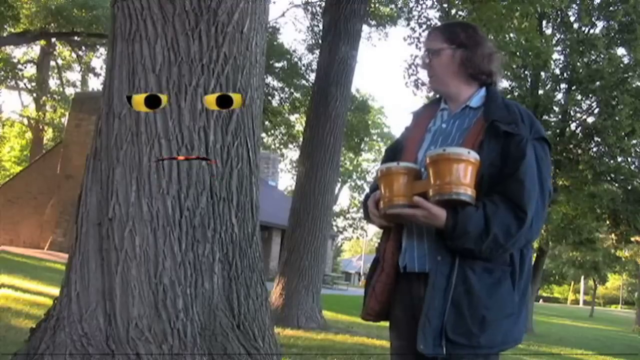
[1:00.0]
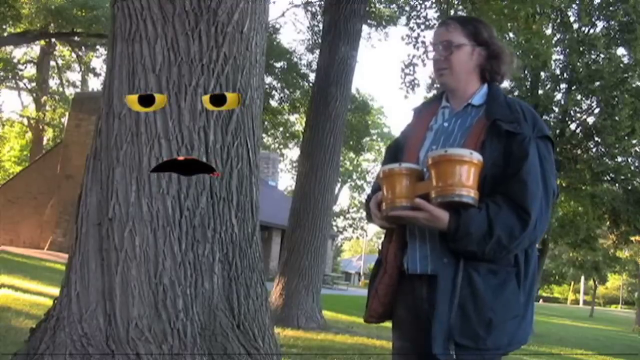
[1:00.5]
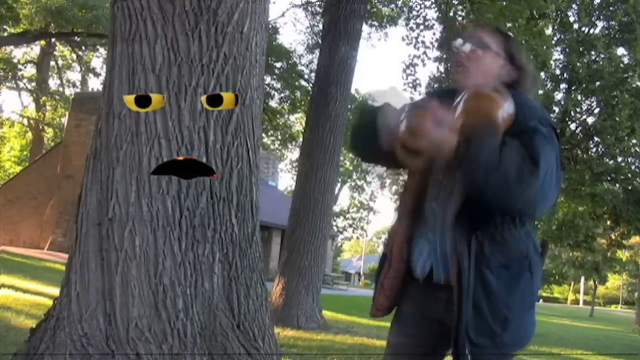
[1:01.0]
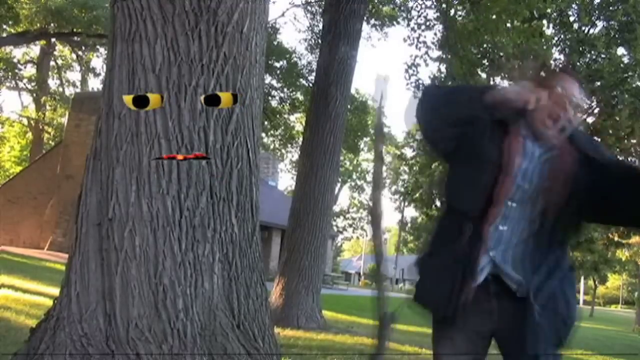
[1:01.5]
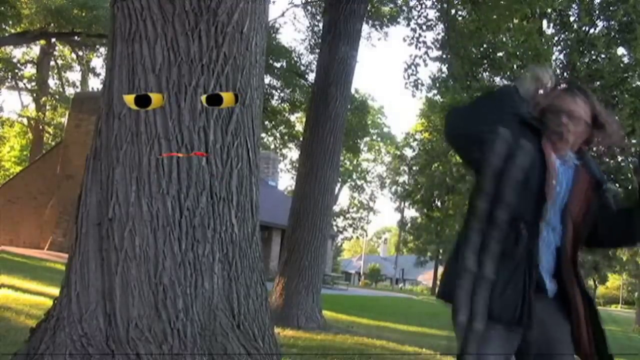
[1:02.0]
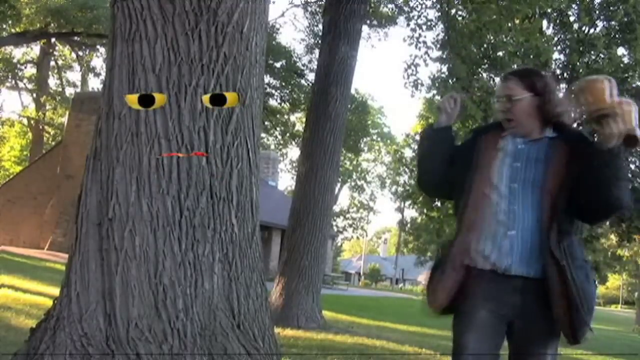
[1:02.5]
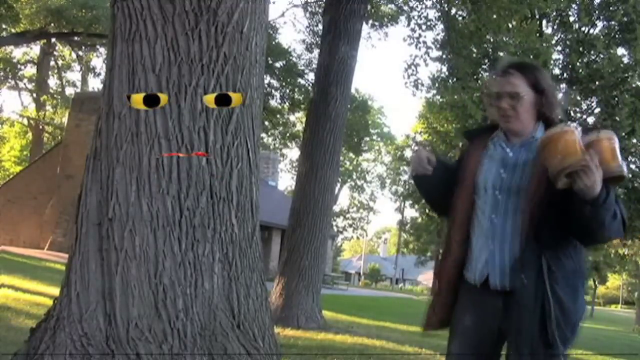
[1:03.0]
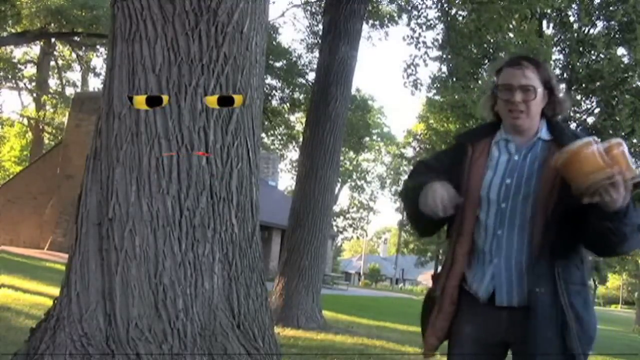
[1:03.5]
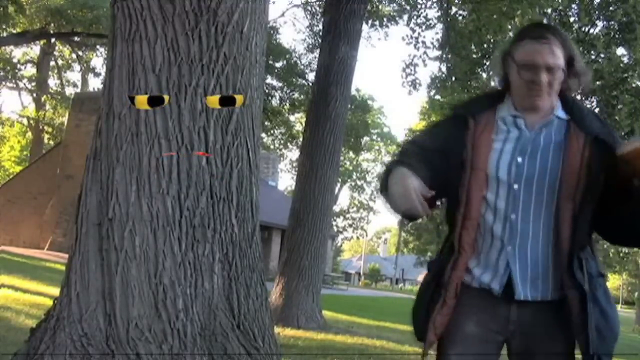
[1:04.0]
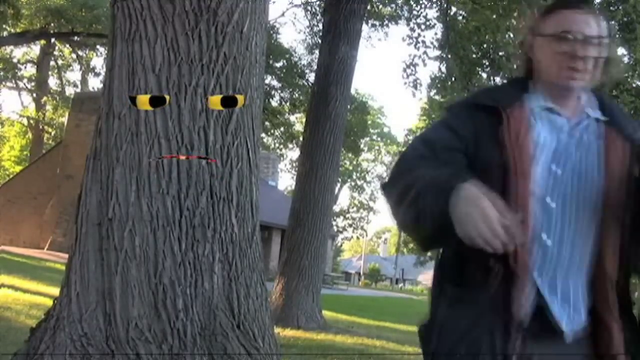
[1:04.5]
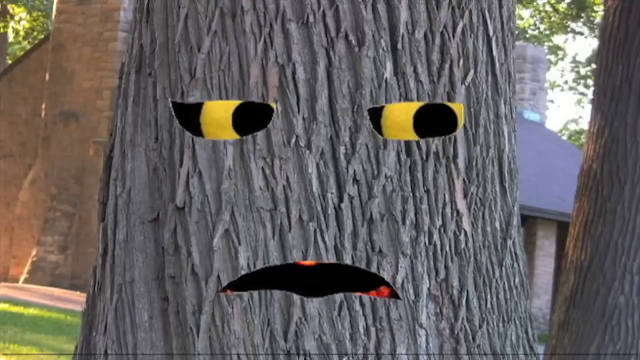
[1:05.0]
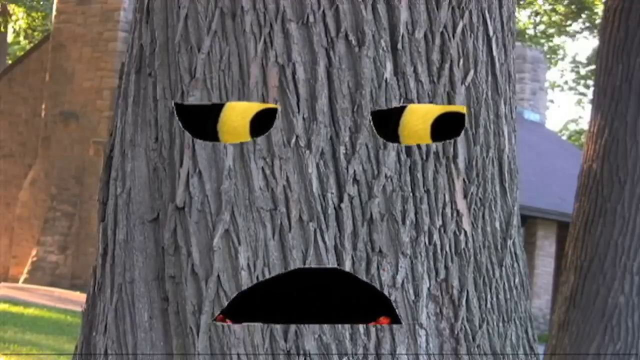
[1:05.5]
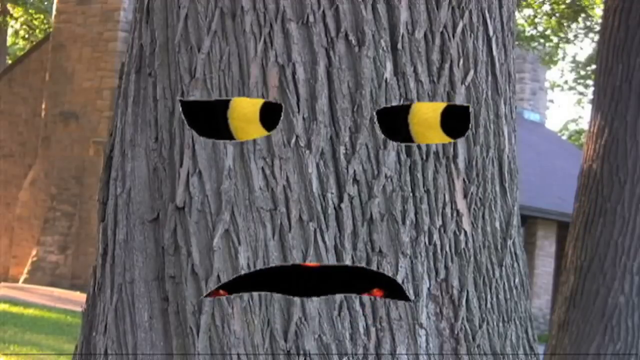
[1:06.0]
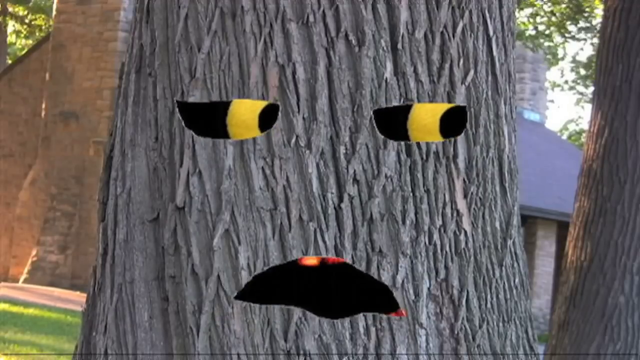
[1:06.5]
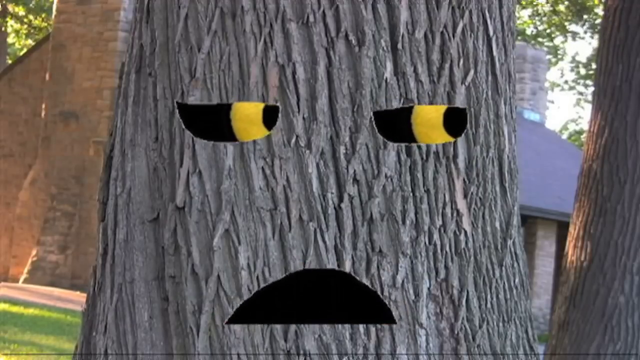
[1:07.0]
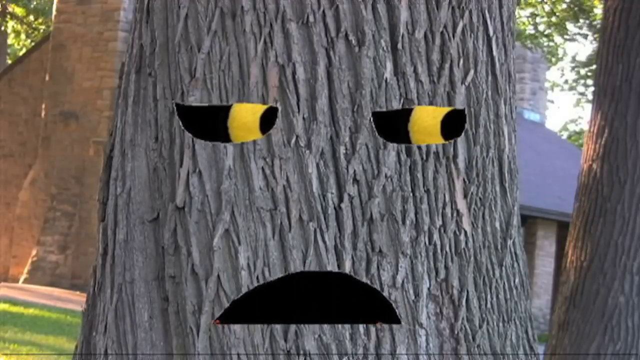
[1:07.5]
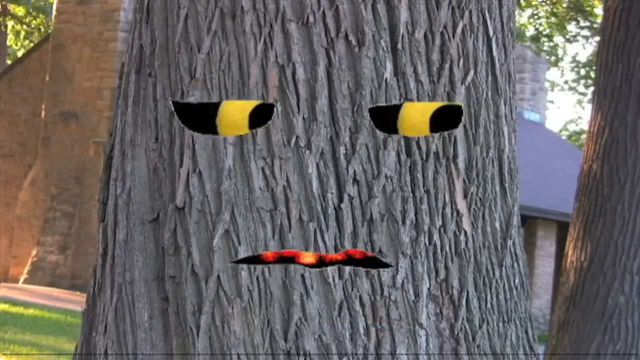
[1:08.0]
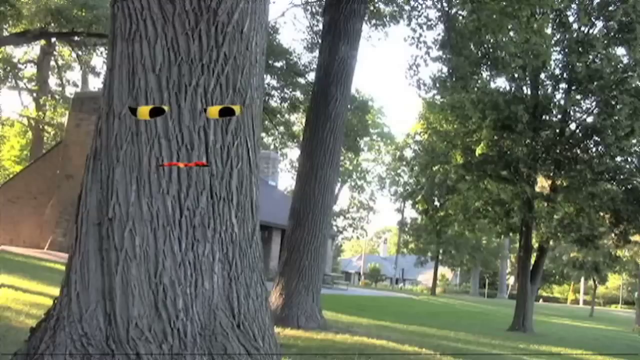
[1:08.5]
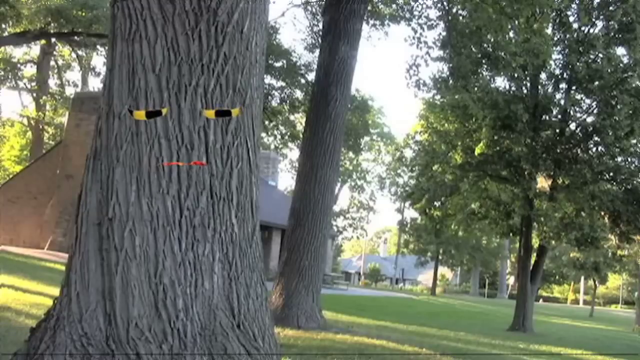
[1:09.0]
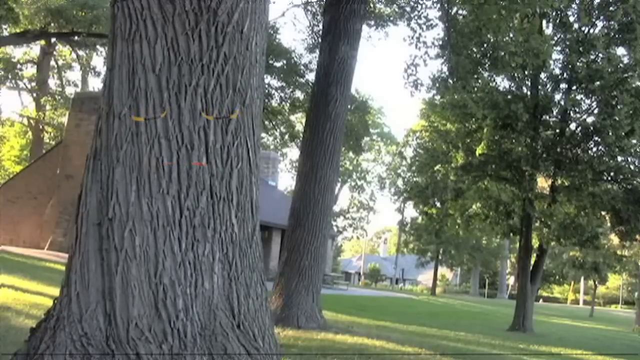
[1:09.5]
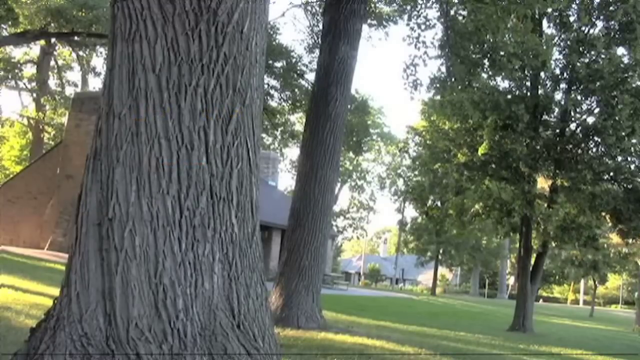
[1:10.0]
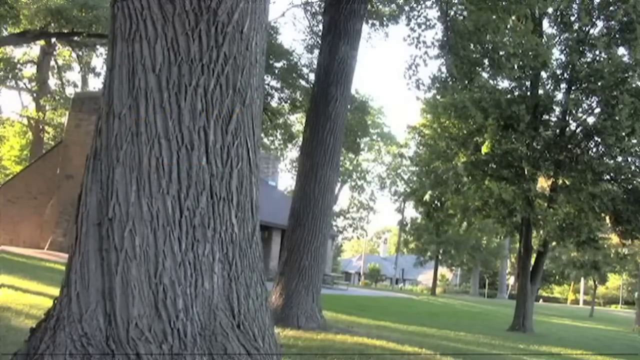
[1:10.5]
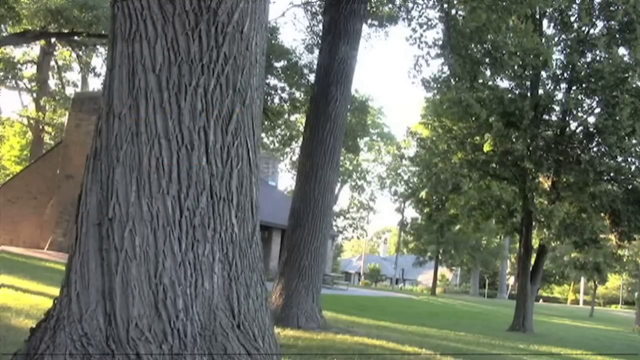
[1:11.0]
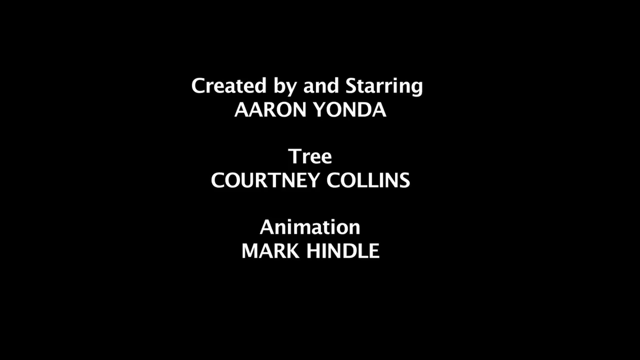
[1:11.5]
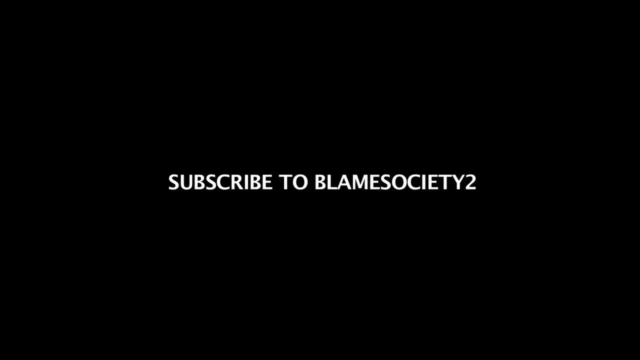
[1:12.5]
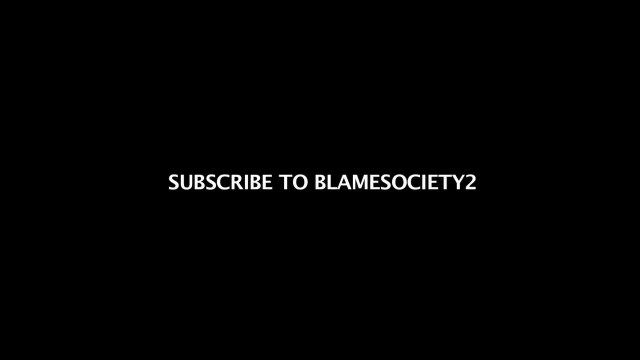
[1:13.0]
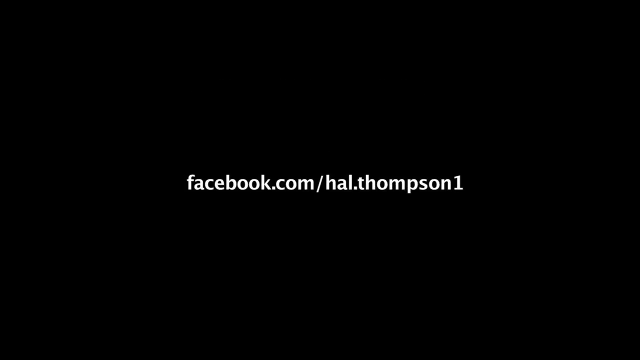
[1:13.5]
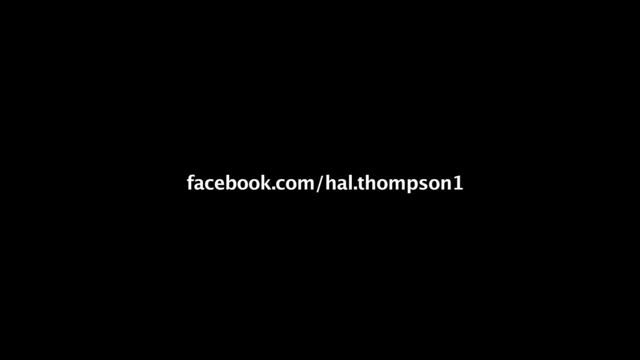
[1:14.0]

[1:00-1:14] A shot shows the tree and the man; the tree is talking when something falls from the sky, apparently a branch, possibly thrown down at the man by the tree. In a close-up of the talking tree, the man has sort of fallen over and is off the screen. The tree's eyes and mouth then disappear. A credits screen follows: a black screen with white text in the middle reading "created by and starring Aaron Yonda", below that "tree Courtney Collins", and below that "animation Mark Hindle". The next black screen with white text reads "subscribe to blame society", and a final black screen with white text reads "facebook.com/hal.thompson1".